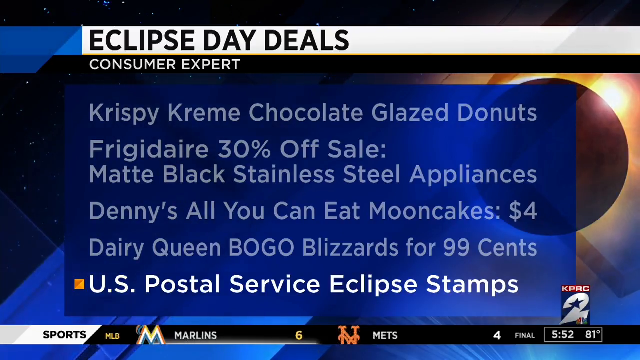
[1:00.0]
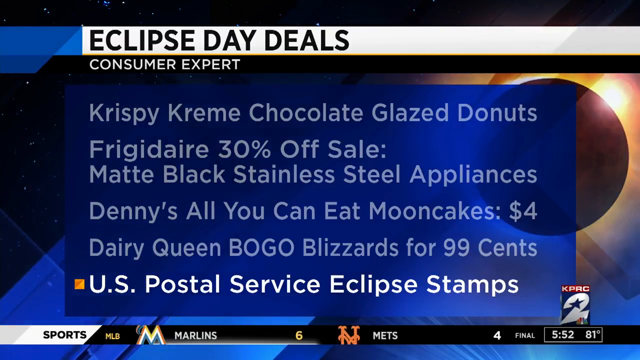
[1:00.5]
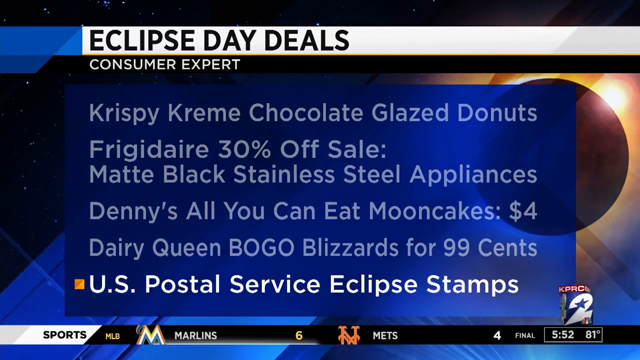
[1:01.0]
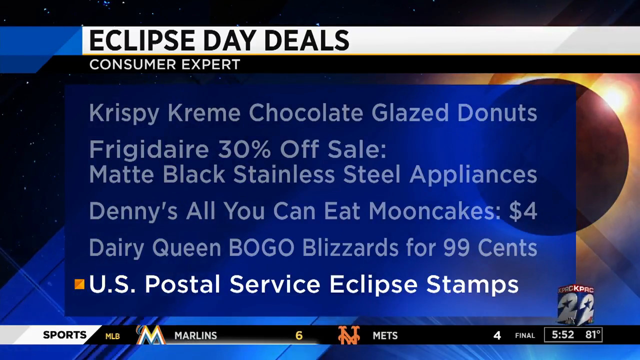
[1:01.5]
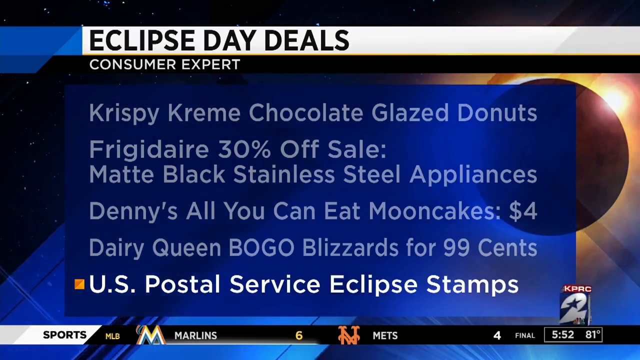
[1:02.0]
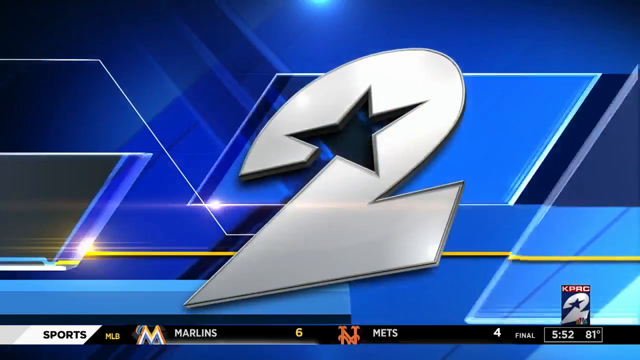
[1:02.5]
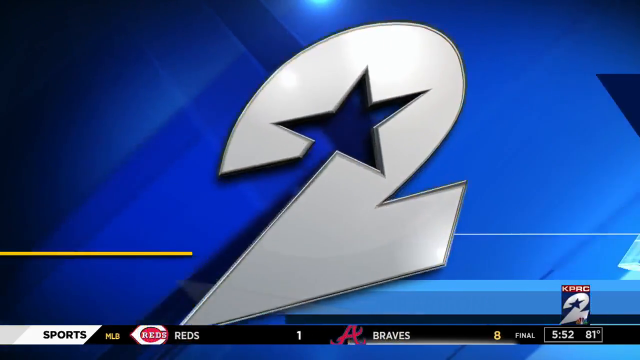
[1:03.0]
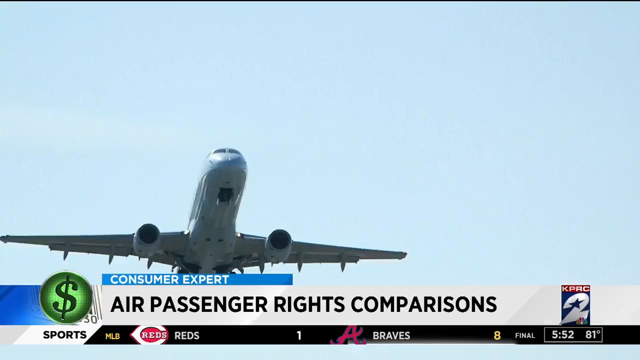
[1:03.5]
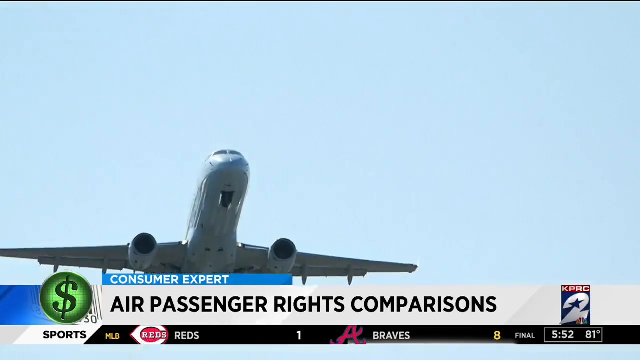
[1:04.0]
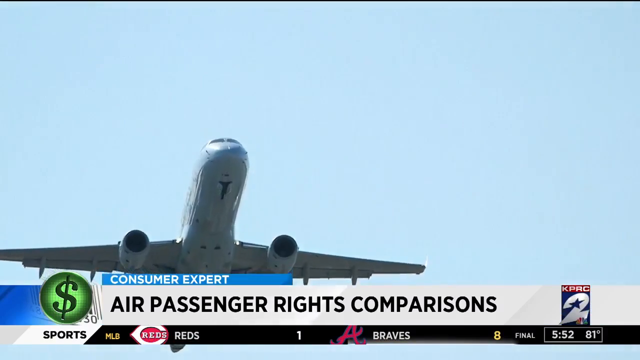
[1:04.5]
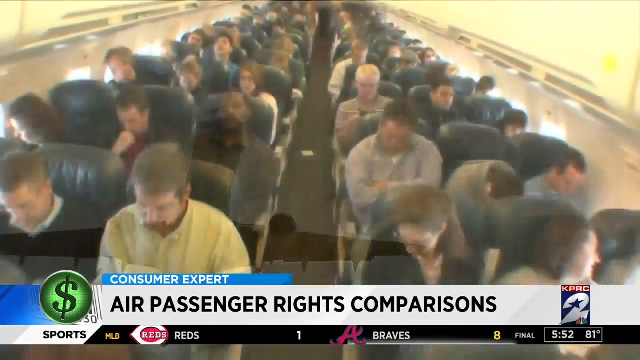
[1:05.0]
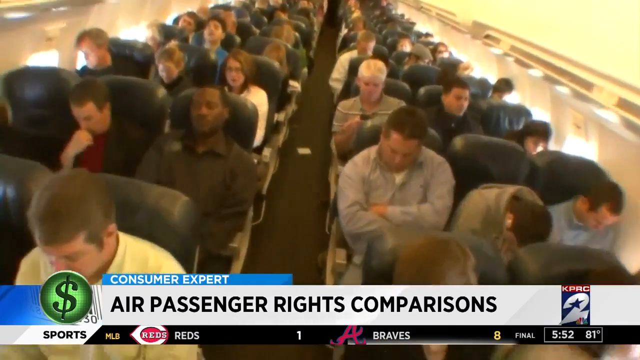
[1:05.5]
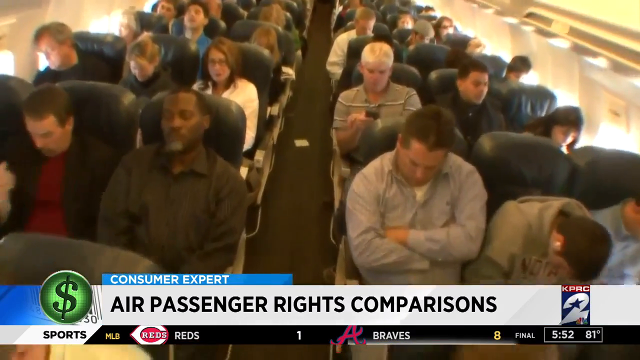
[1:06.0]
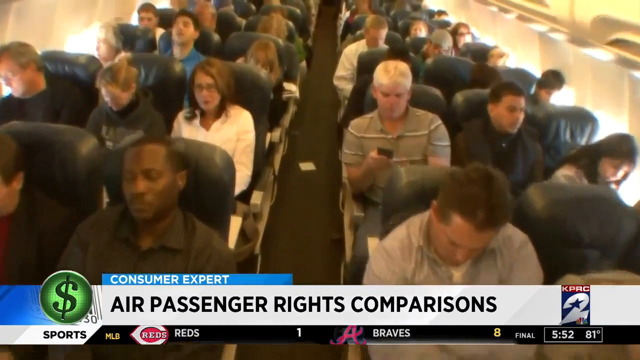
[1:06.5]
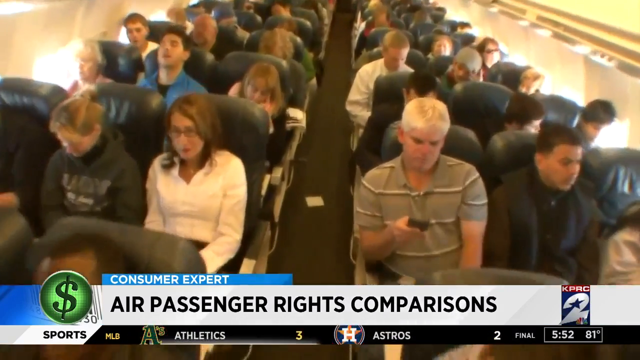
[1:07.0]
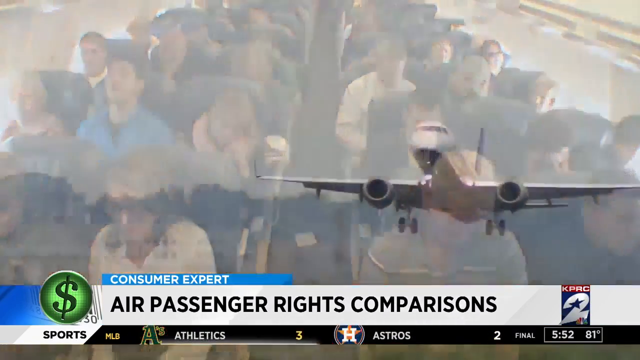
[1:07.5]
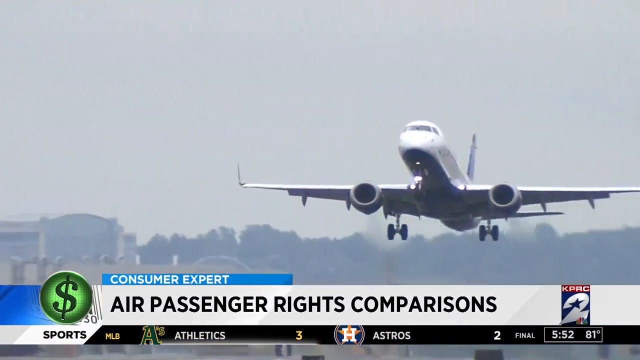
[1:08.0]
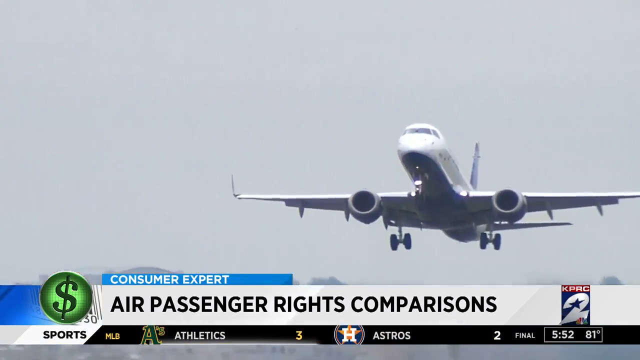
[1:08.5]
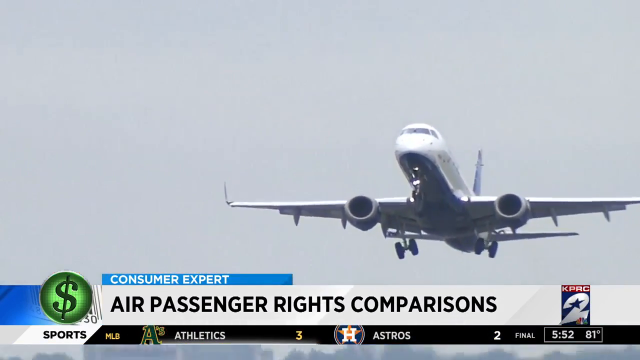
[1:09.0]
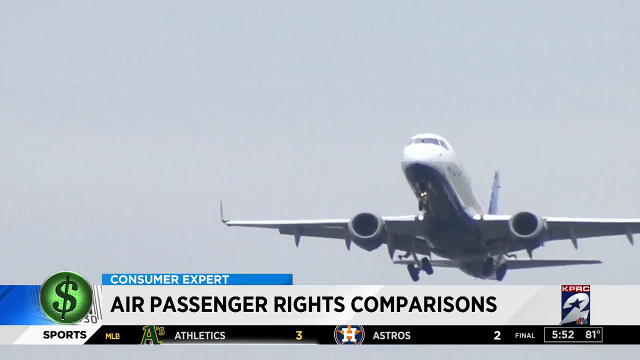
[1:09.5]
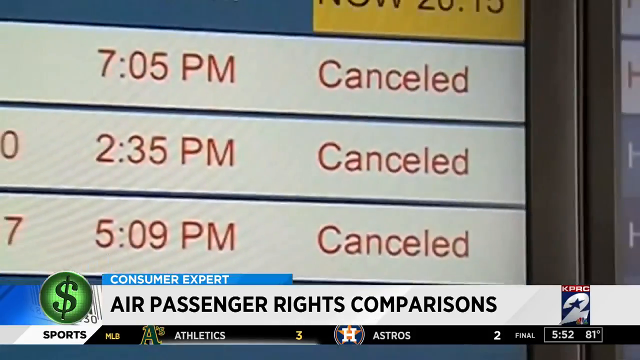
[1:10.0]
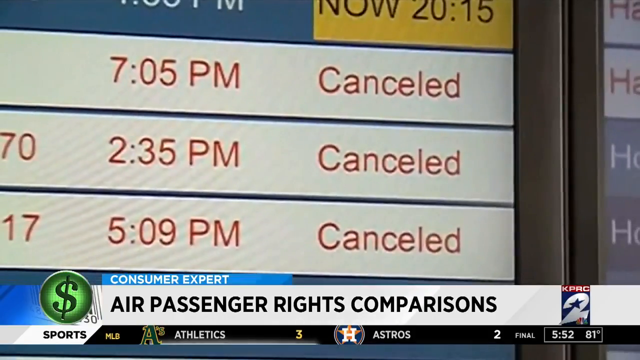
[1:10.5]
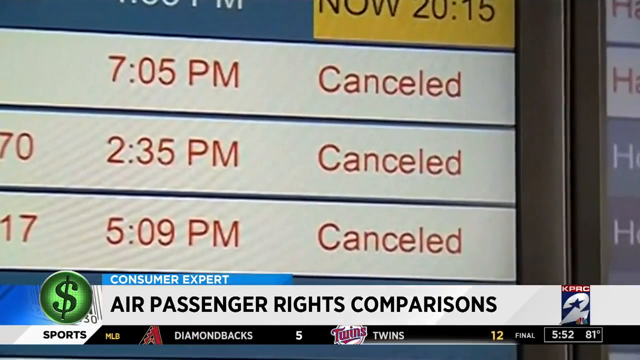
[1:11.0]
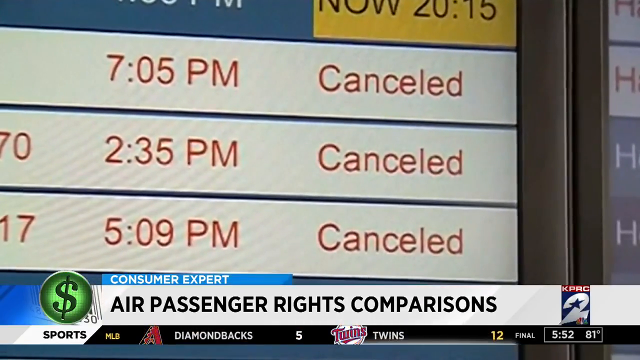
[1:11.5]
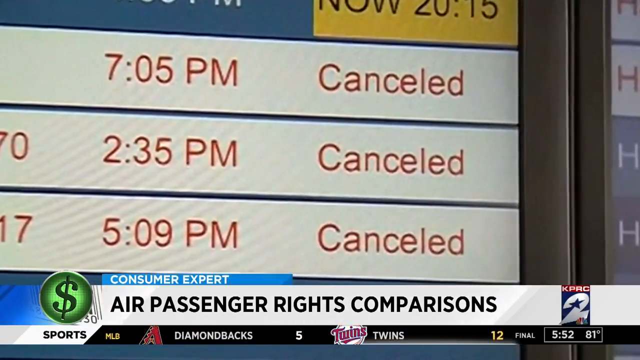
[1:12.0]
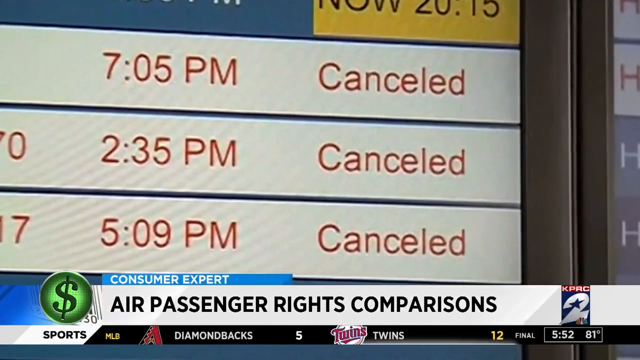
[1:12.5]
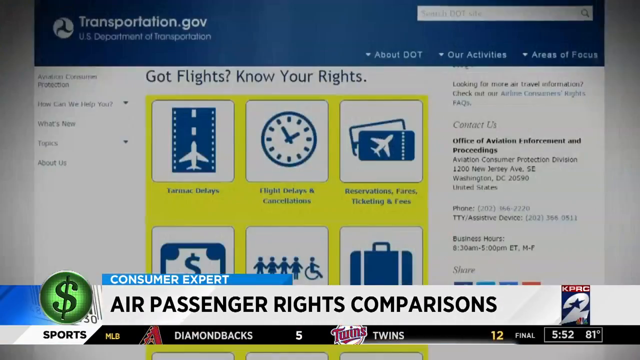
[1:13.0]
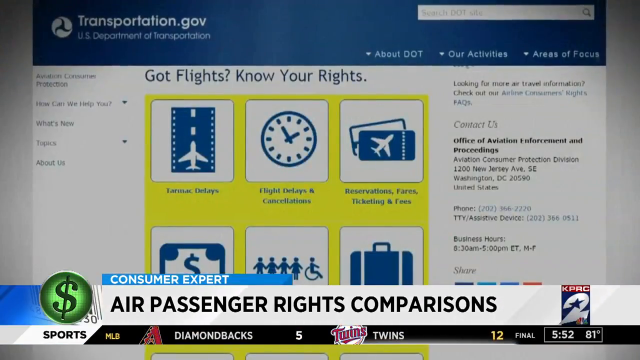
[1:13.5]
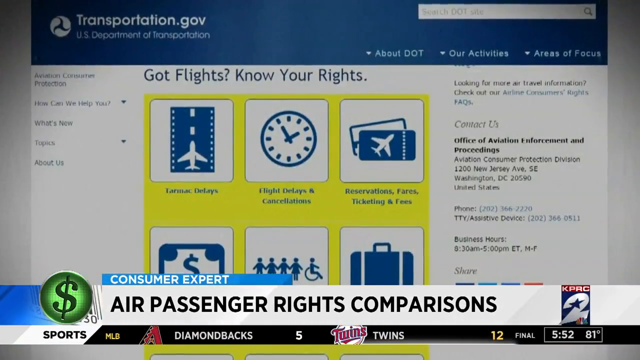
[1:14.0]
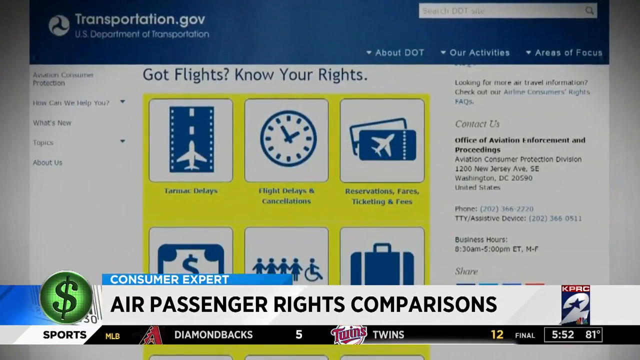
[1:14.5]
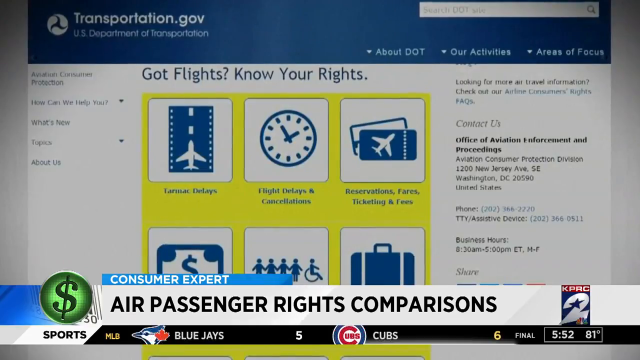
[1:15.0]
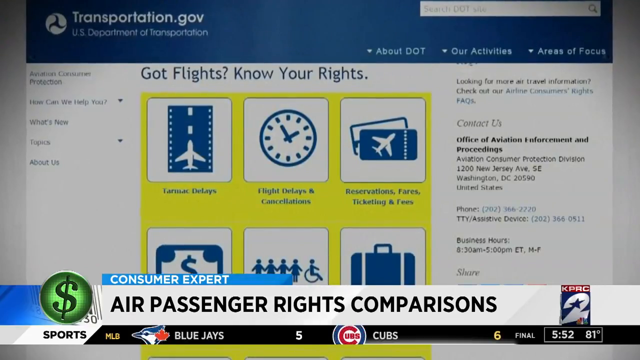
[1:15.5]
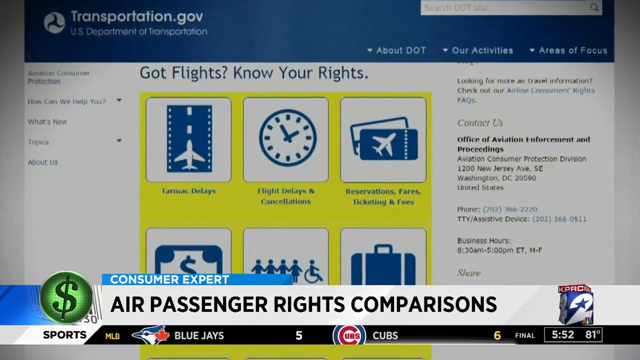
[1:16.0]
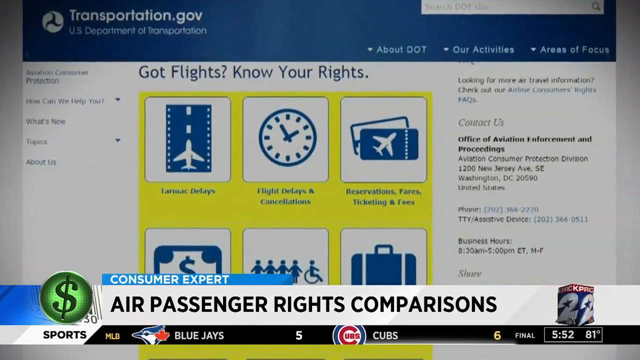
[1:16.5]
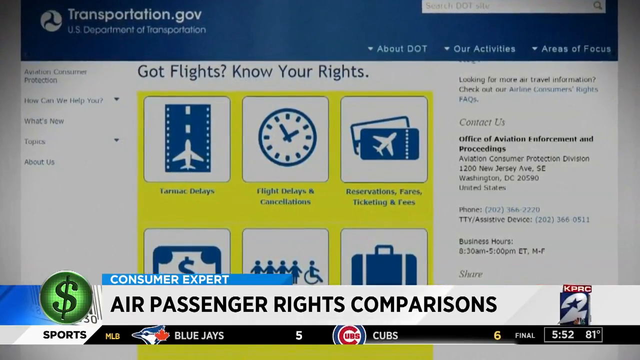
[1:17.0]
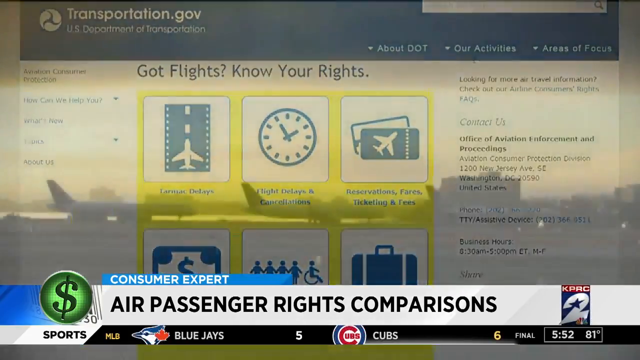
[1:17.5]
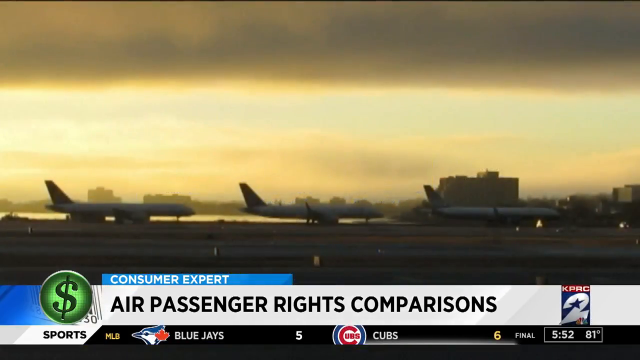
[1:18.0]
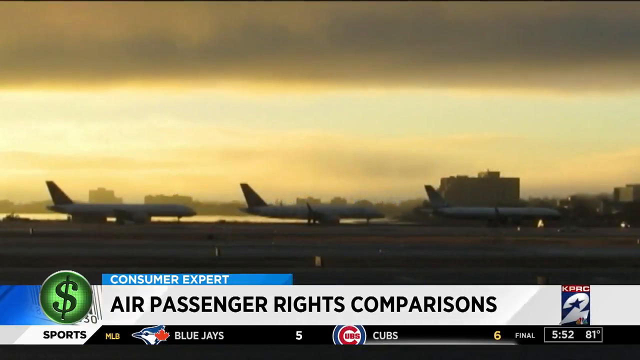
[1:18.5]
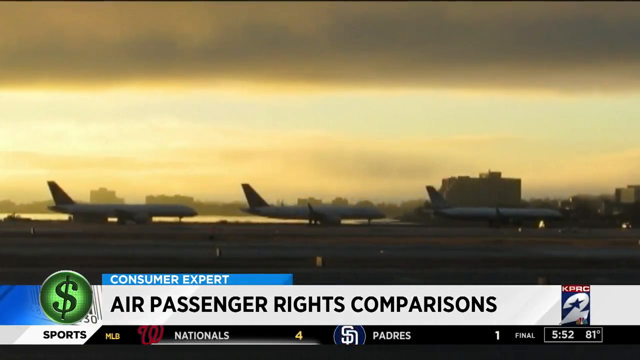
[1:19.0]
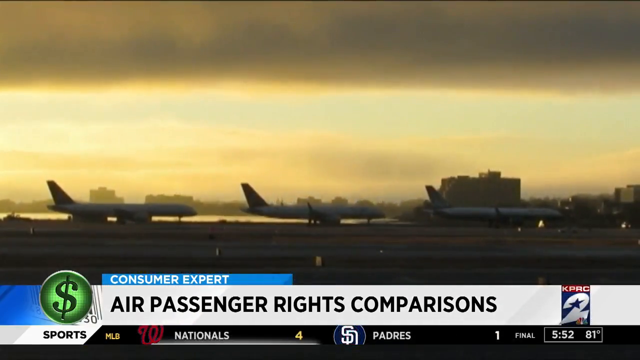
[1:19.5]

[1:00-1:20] A blue screen shows a 2 and a star in the middle. A plane flies in a slightly foggy, somewhat blue sky. A headline reads "Consumer Expert" and "Passenger Rights Comparison" with a green dollar sign. Inside, the airplane is full of passengers of different genders and skin shades. A white plane flies away. A departures board shows cancelled flights at 7:05 p.m., 2:35 and 5:09, and then a time of 8:15 p.m. A page on the U.S. Department of Transportation website, transportation.org, displays "know your rights" along with information about flights, delays and cancellations, reservations, fares and ticketing fees, and contact numbers for questions about flights. It lists the Office of Aviation Enforcement and Proceedings, "1200 New Jersey Avenue, Southeast Washington, D.C. 20590 United States", with a phone number at the bottom and opening hours from 6:30 to 5 p.m. Eastern Time, Monday to Friday.